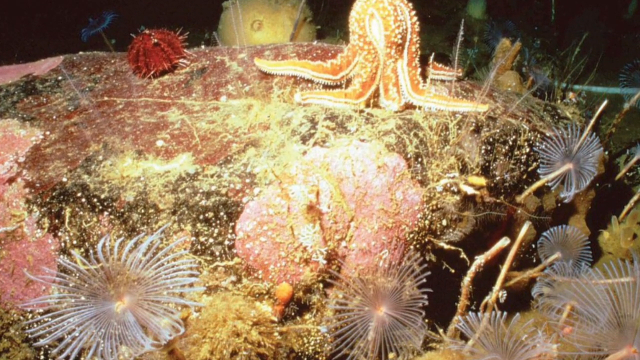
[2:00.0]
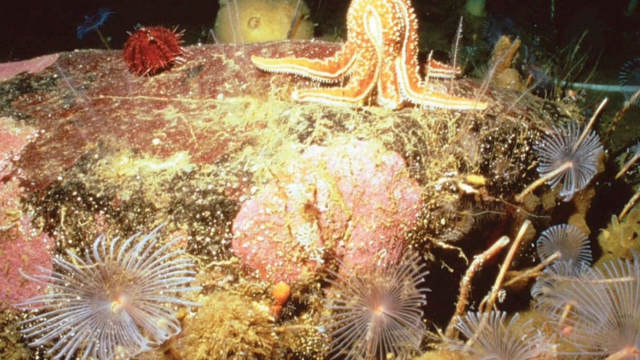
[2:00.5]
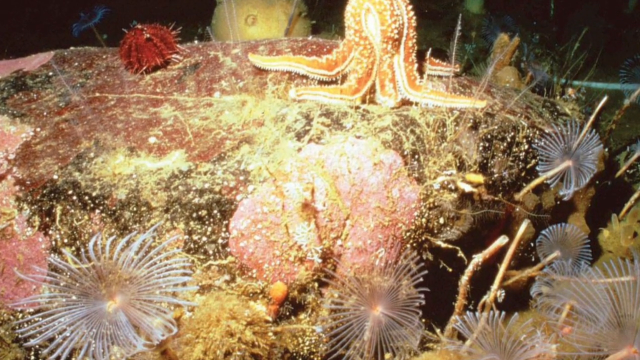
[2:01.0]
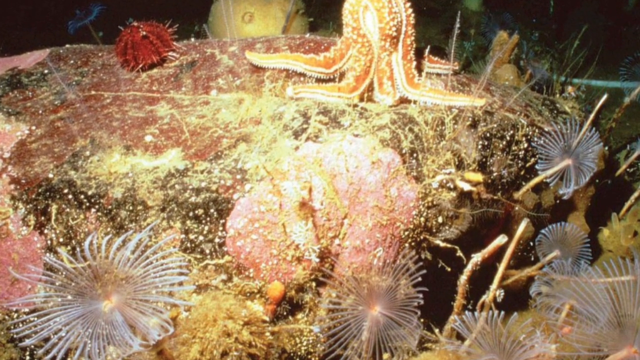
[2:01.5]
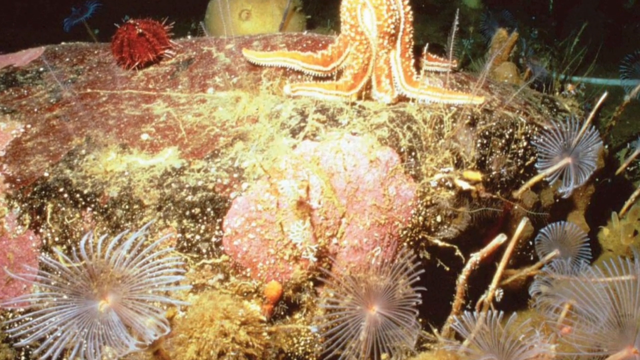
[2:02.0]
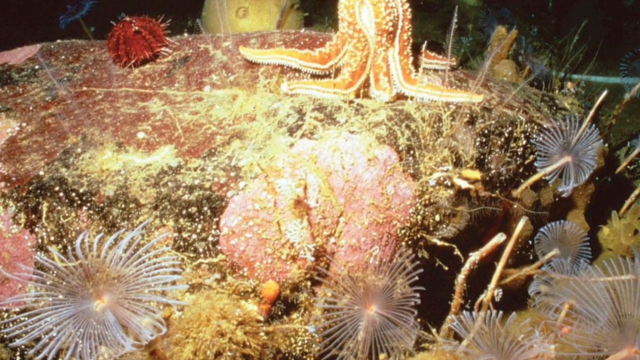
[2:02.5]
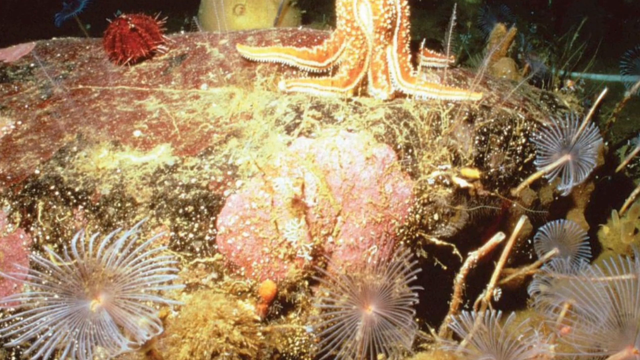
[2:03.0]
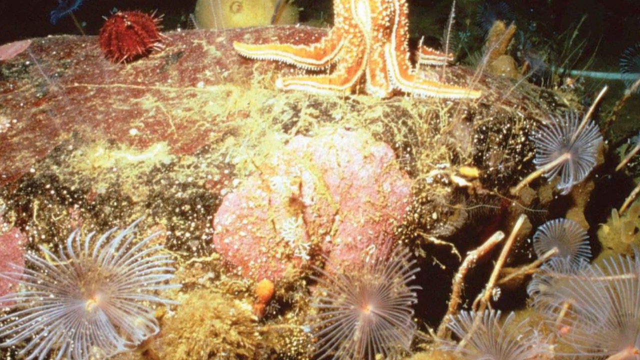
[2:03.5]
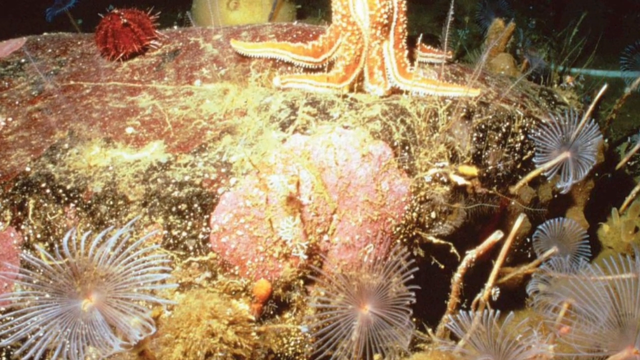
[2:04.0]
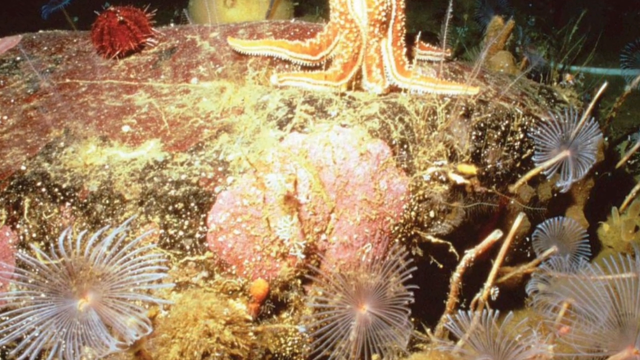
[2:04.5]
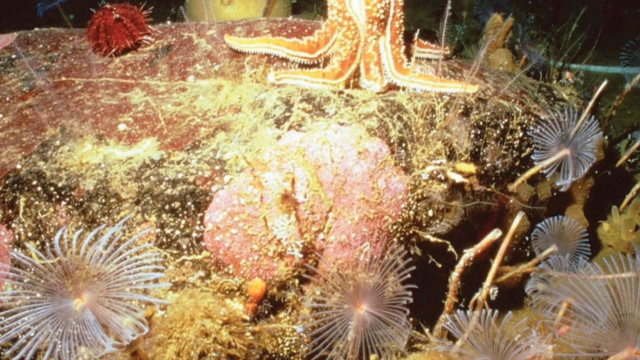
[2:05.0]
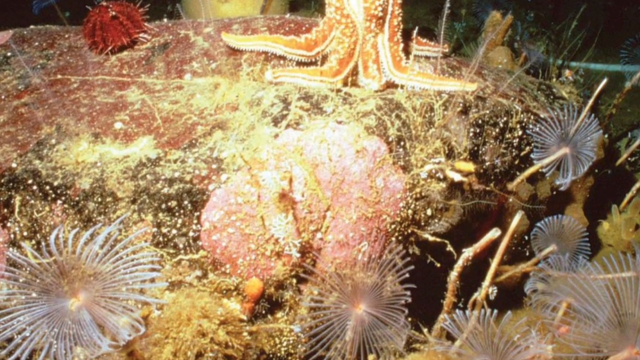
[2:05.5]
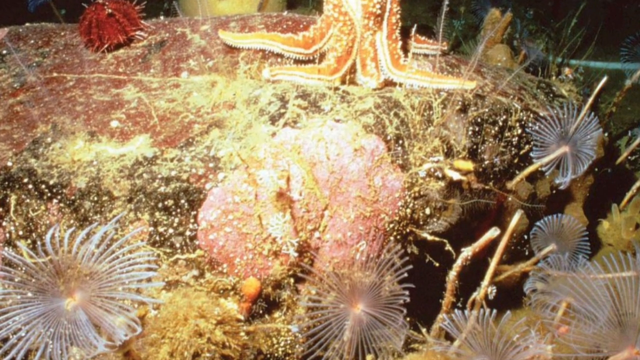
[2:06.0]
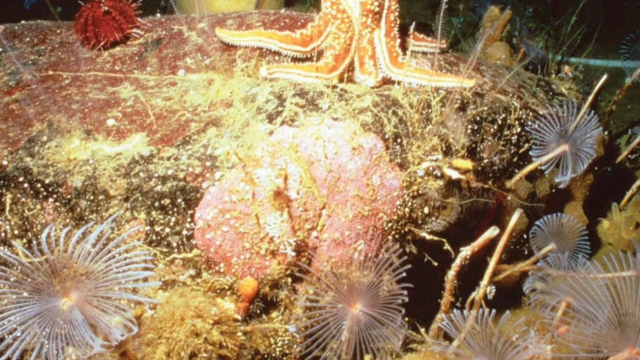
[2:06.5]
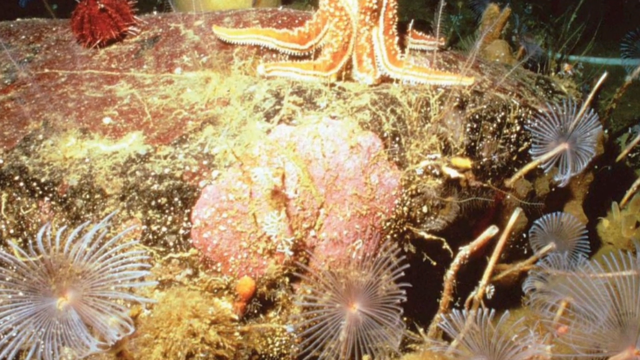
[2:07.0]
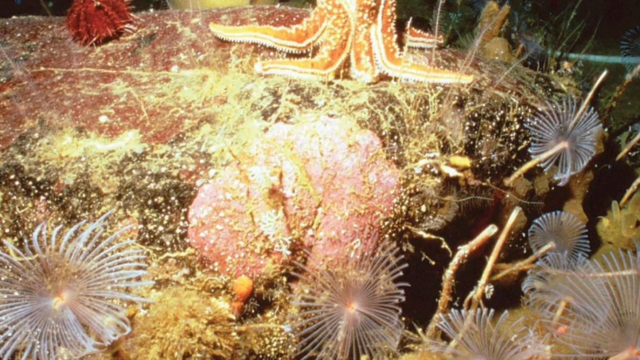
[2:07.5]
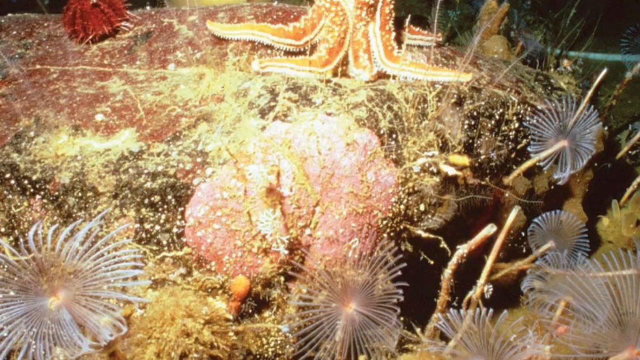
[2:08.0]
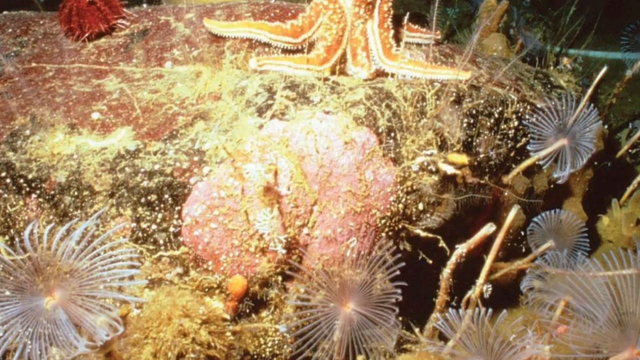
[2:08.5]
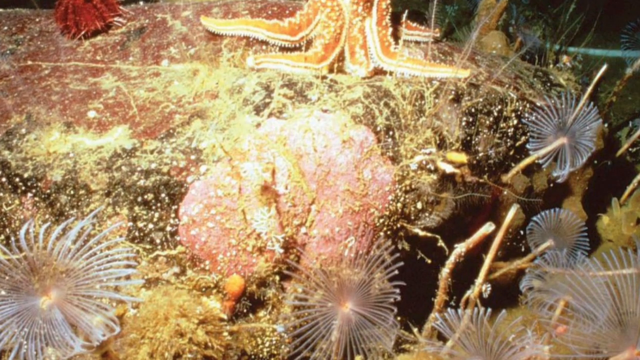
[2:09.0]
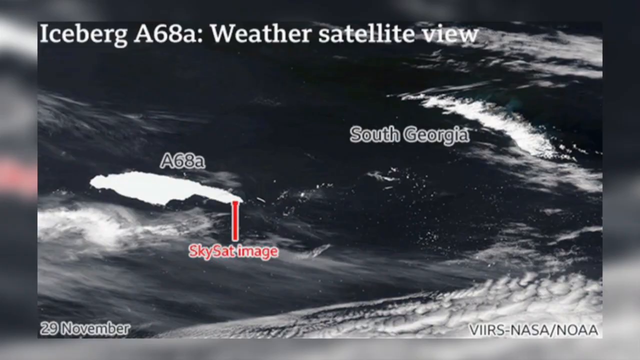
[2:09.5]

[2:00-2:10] The image of various sea creatures at the bottom of the ocean continues, with lots of green vegetation. The next image shows an iceberg in the middle of a large ocean. The water looks very dark blue, and strong waves make the ocean appear very choppy, fierce and dangerous. The title above the image reads "Iceberg A68a: Weather satellite view" in large white text. The text "South Georgia" appears in white letters on the left-hand side, and the text "sky sat image" appears in red letters underneath what looks like an illustration of an iceberg.